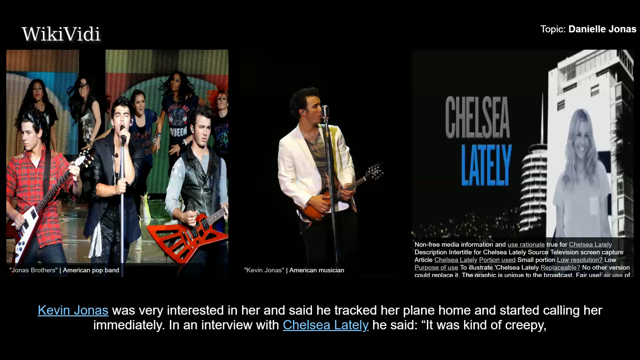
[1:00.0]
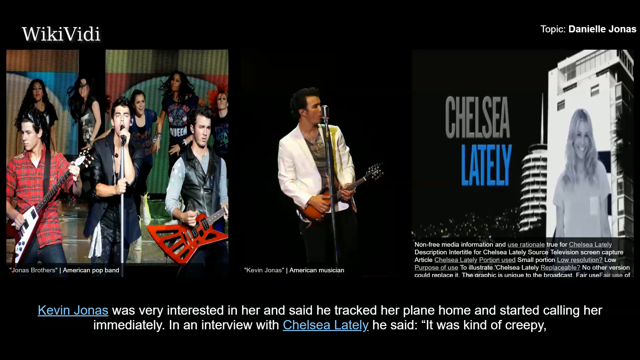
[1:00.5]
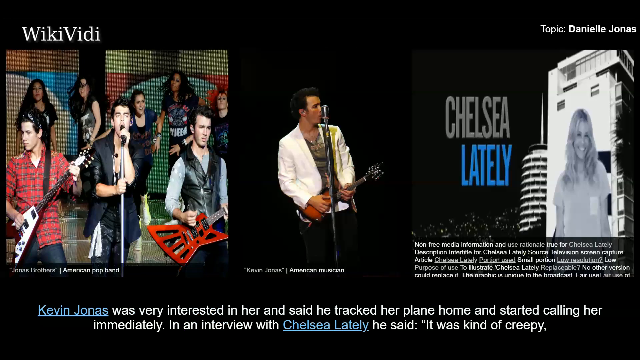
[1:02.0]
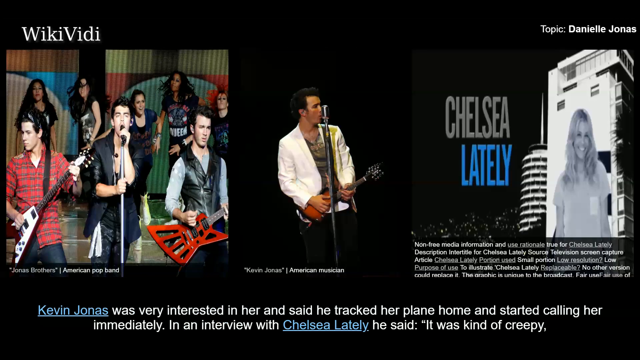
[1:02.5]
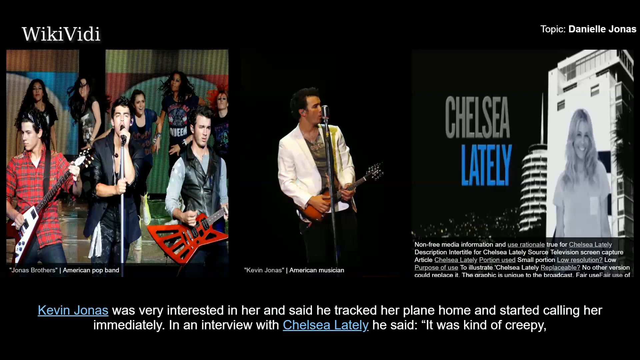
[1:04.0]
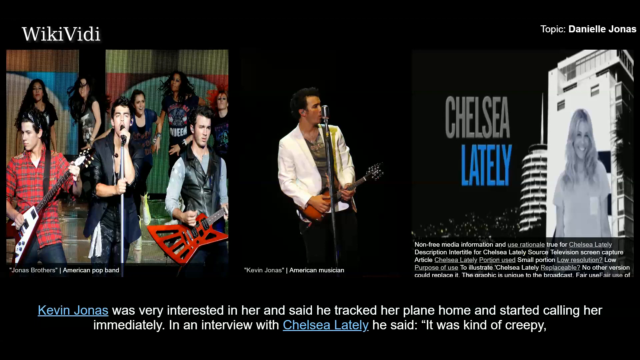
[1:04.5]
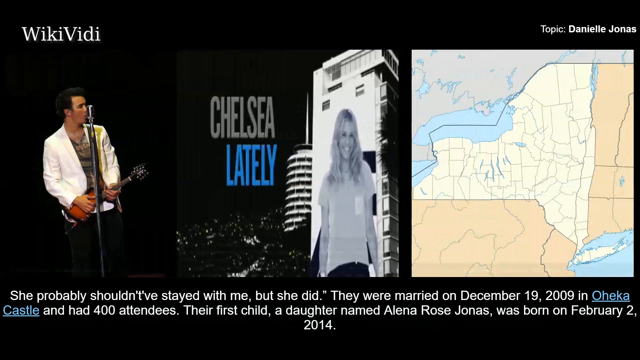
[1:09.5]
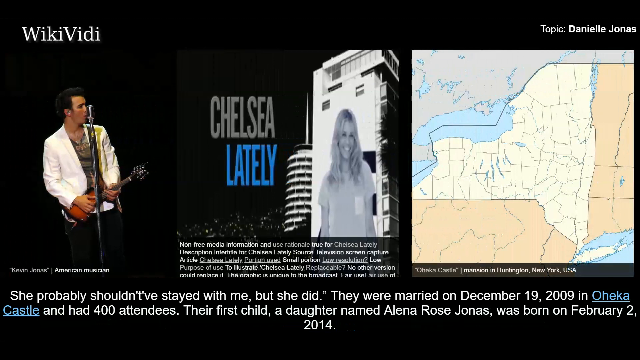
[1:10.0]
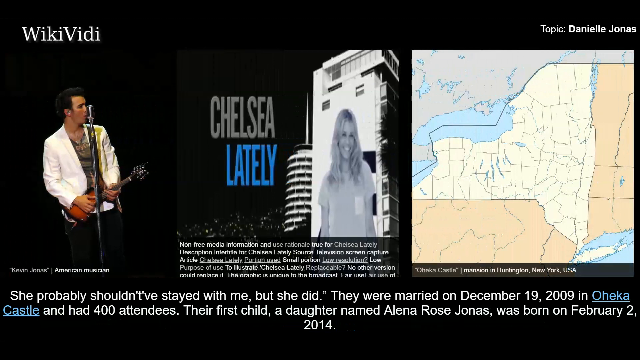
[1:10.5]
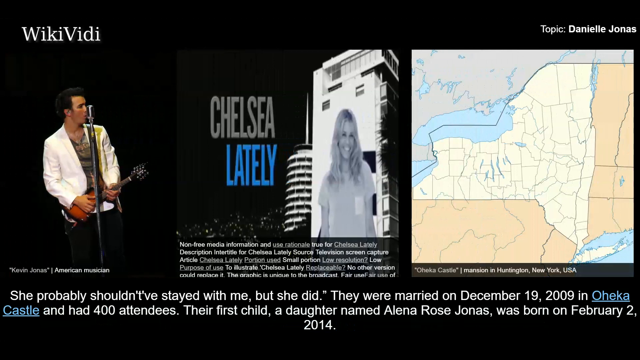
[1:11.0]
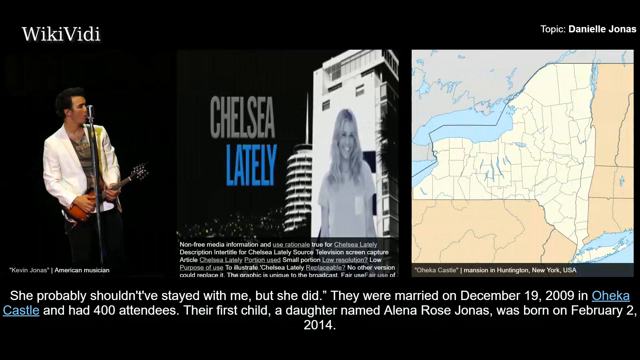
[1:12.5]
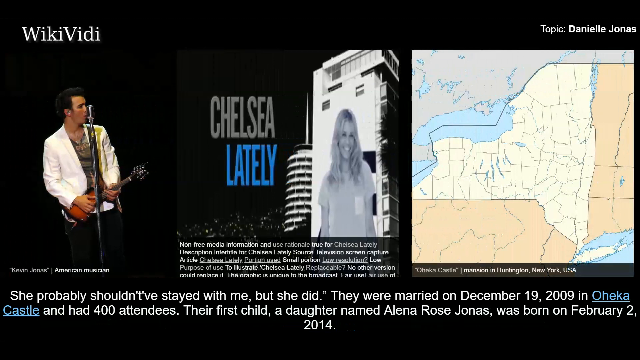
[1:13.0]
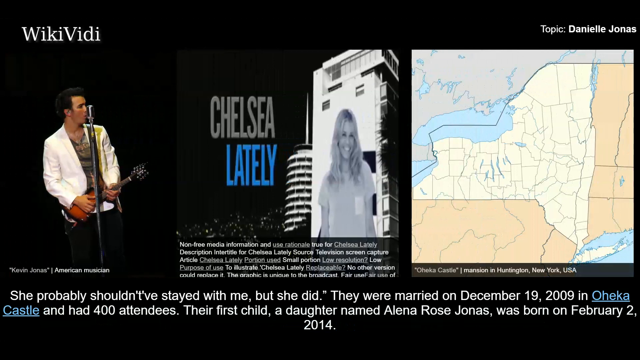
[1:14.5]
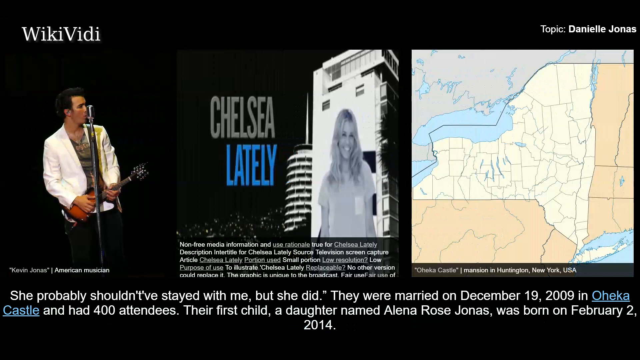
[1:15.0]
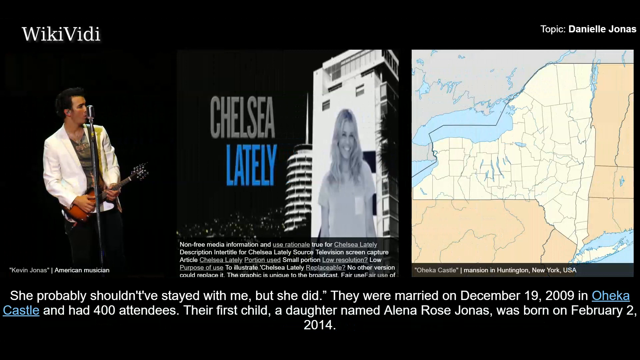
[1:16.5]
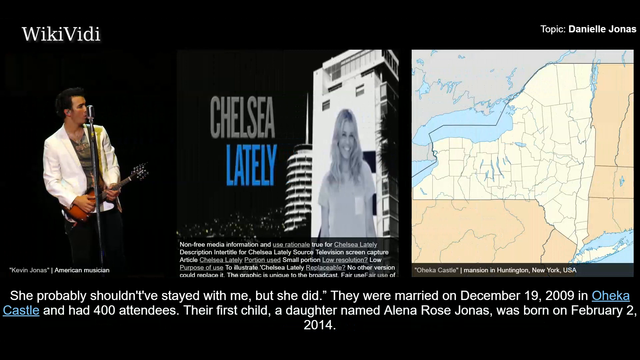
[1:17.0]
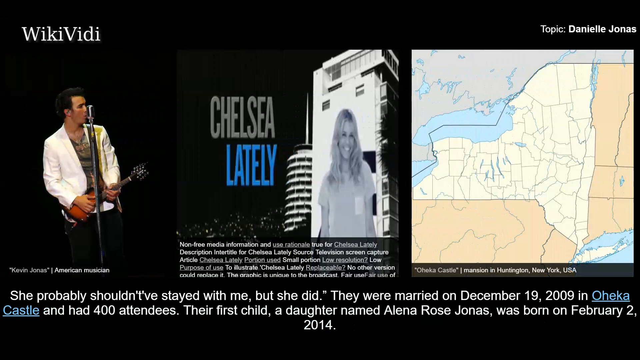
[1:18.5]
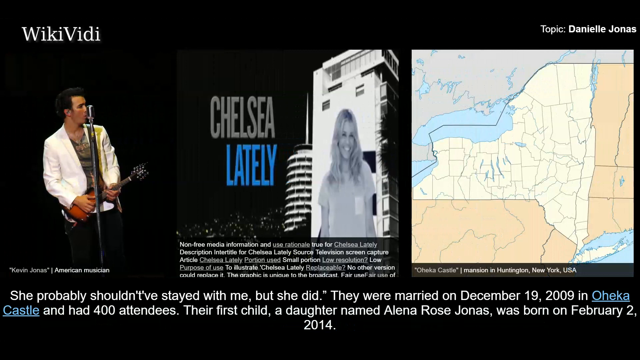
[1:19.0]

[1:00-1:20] Three images are over the middle of the black background, and the short paragraph below them says that Kevin Jonas was very interested in her, that he said he tracked her plane home and started calling her immediately, and that in an interview with Chelsea Lately he said it was kind of creepy. The far-right image is the Chelsea Lately advertisement, with "Chelsea Lately" in large text and an image of Chelsea pasted over a white building. Halfway through, the bottom paragraph is replaced with a different one, and a map of the state of New York appears on the far right. The new paragraph says that Kevin and Danielle were married on December 19, 2009, that they had 400 attendees at their wedding, and that they had a daughter named Alena Jonas, born in 2014.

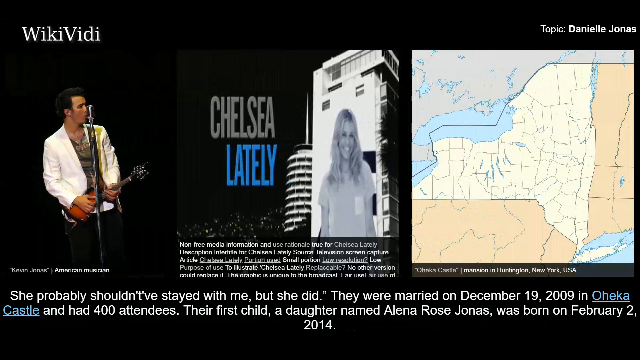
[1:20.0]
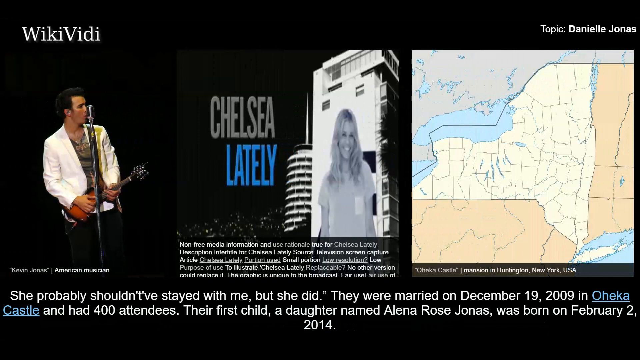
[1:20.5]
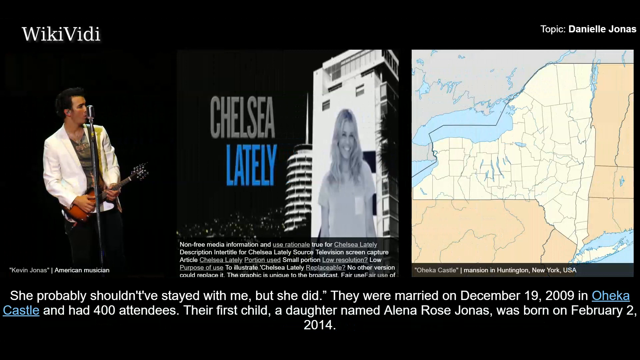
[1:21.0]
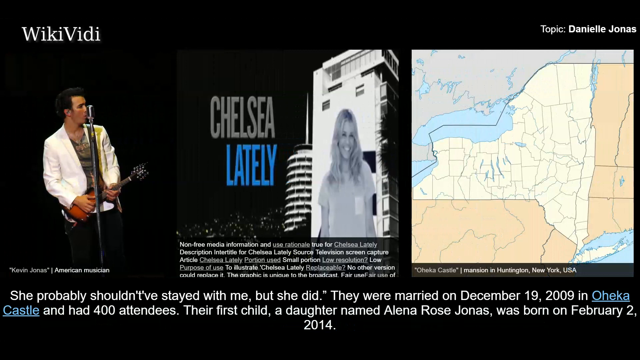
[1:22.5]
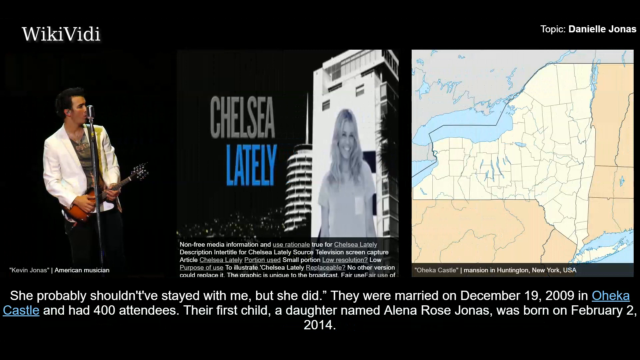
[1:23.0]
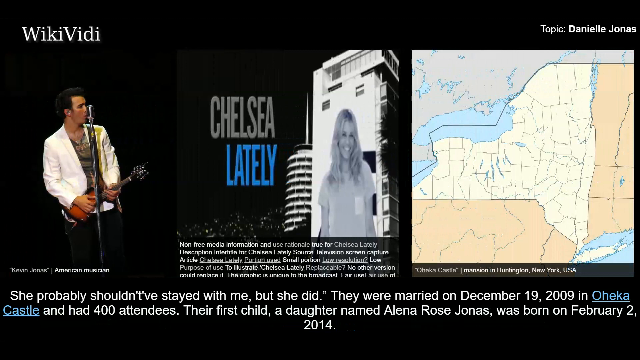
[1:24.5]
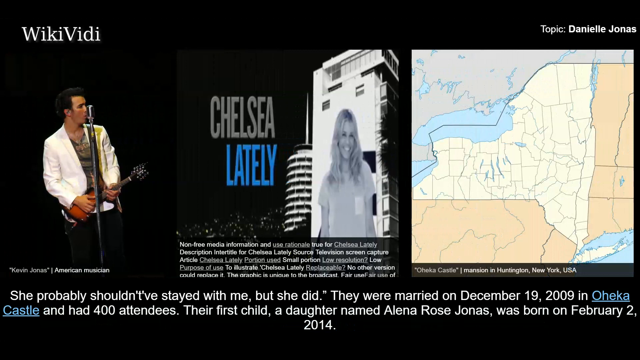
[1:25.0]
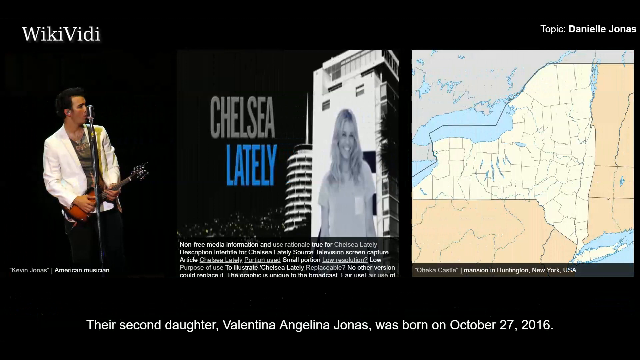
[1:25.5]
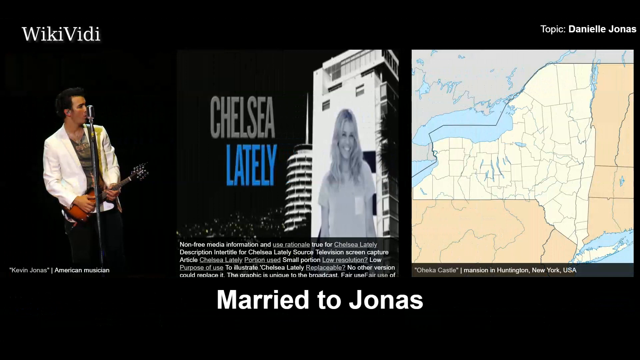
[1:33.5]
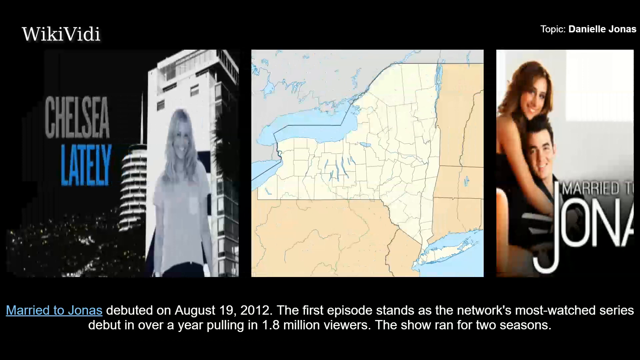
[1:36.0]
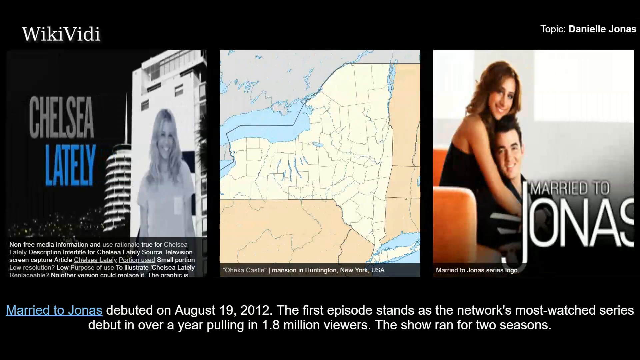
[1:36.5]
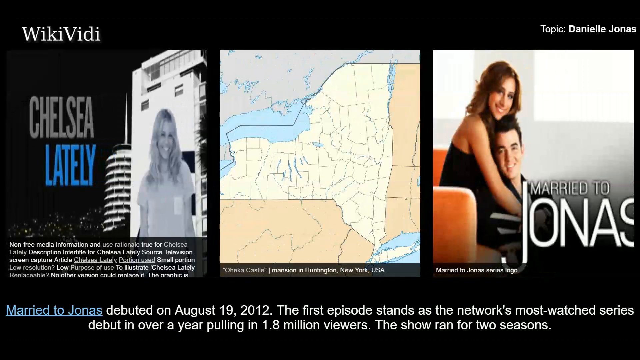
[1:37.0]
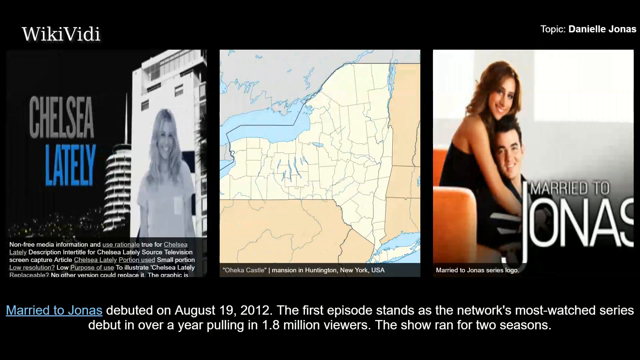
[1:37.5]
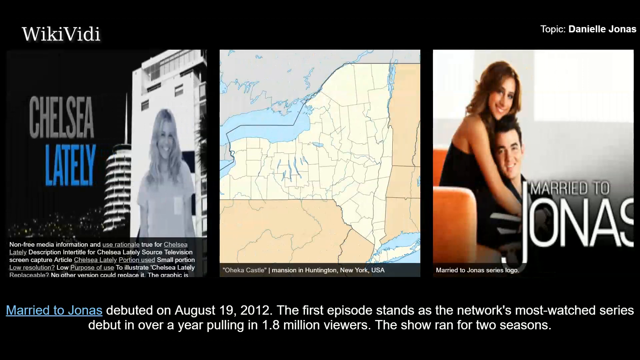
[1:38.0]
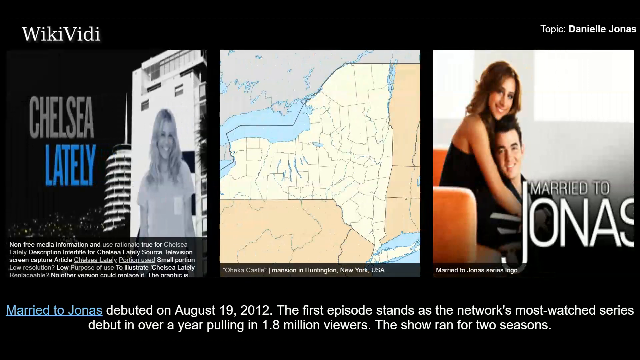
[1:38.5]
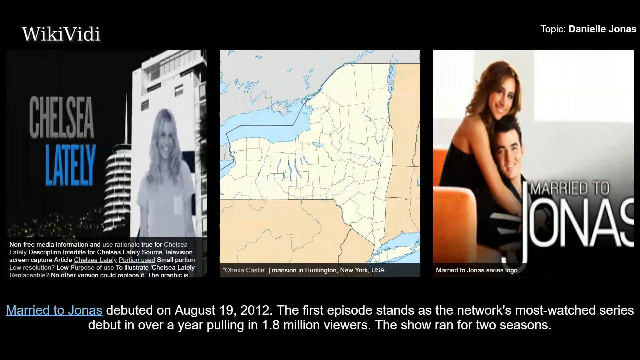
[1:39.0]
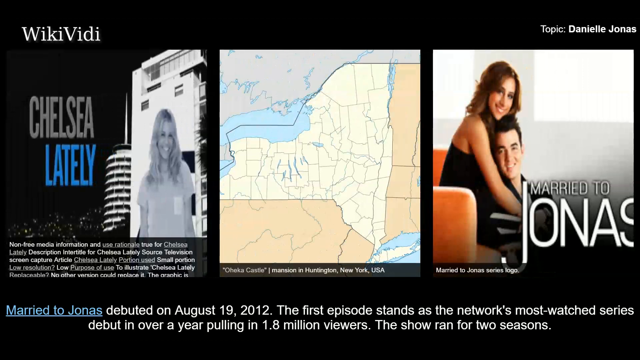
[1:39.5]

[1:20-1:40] The three images pasted over the black background remain. The middle one shows the graphic for Chelsea Lately and the far-right one shows the map of the state of New York; each image has very small white text labeling it at the bottom. Soon the bottom paragraph is replaced by a short sentence: "Their second daughter, Valentina Angelina Jonas, was born on October 27, 2016." That sentence disappears and is replaced by large bold white text reading "married to Jonas." This goes away, and in a transition the far-right image becomes the picture of Danielle and Kevin on the graphic for the Married to Jonas show, while the far-left image goes away. The bottom paragraph is about the Married to Jonas show, saying that it debuted on August 19th, 2012, that the first episode stands as the network's most watched series debut in over a year, that it pulled in 1.8 million viewers, and that the show ran for two seasons.